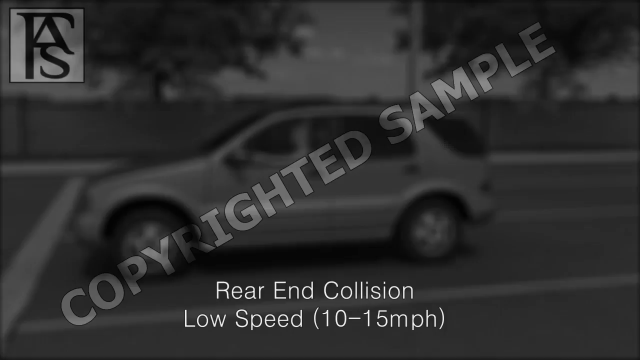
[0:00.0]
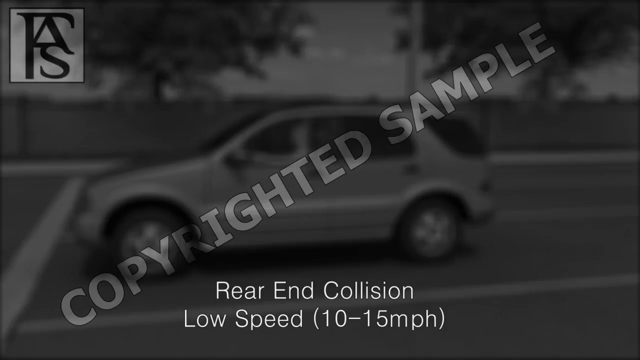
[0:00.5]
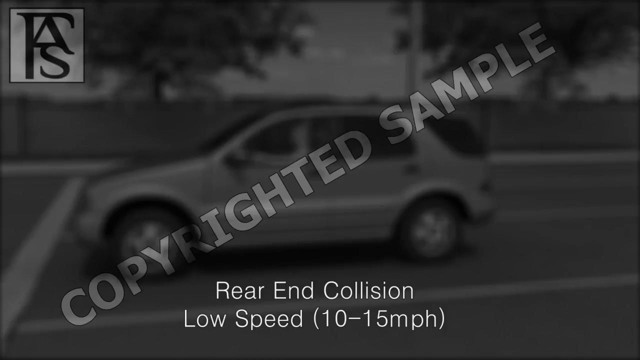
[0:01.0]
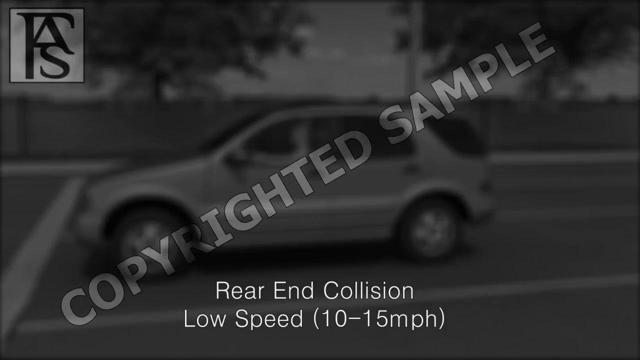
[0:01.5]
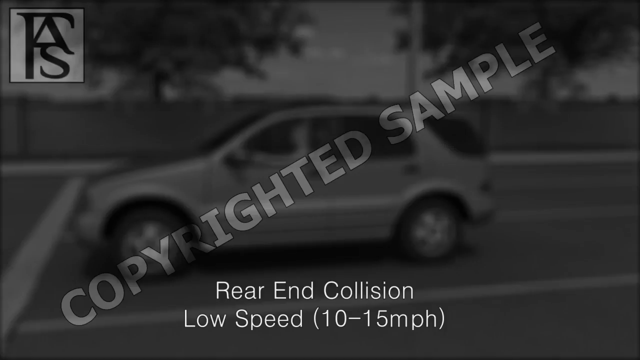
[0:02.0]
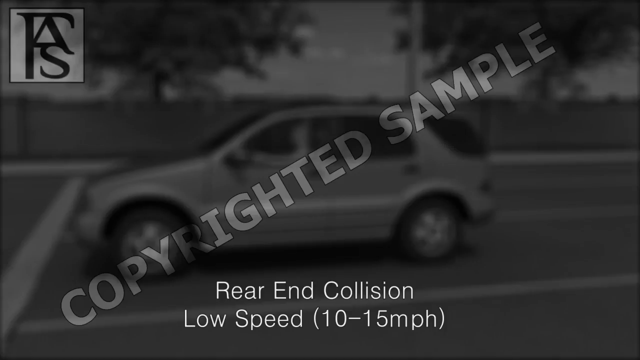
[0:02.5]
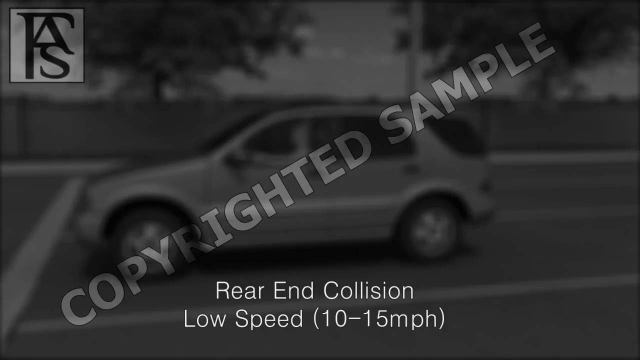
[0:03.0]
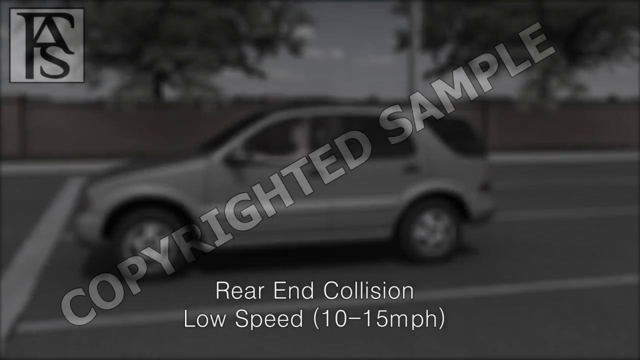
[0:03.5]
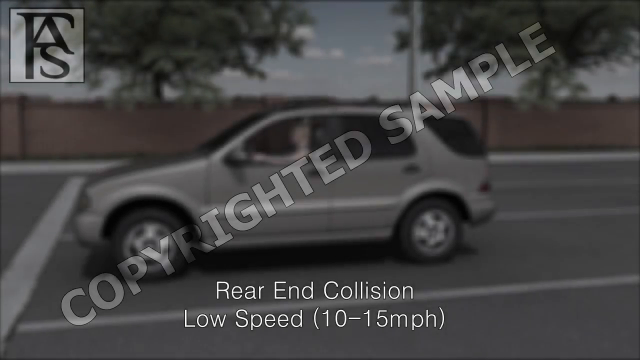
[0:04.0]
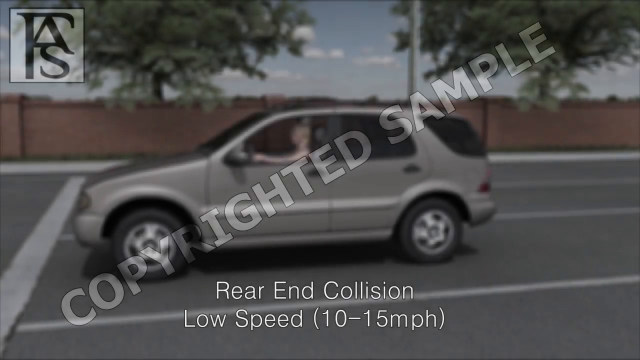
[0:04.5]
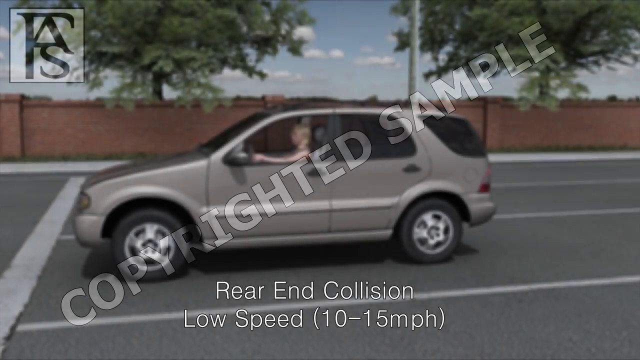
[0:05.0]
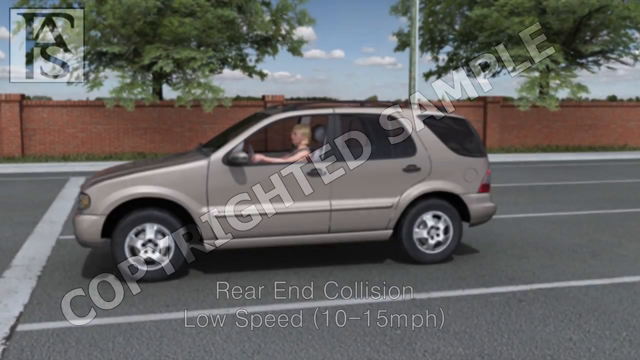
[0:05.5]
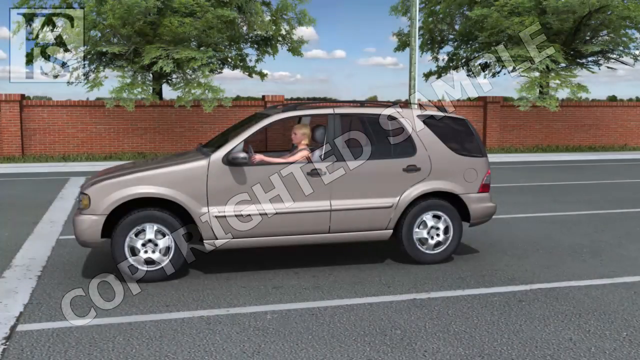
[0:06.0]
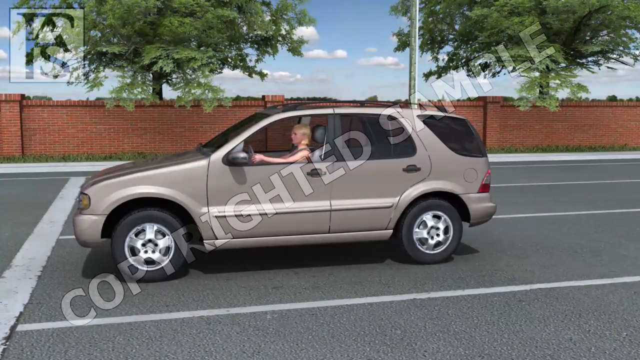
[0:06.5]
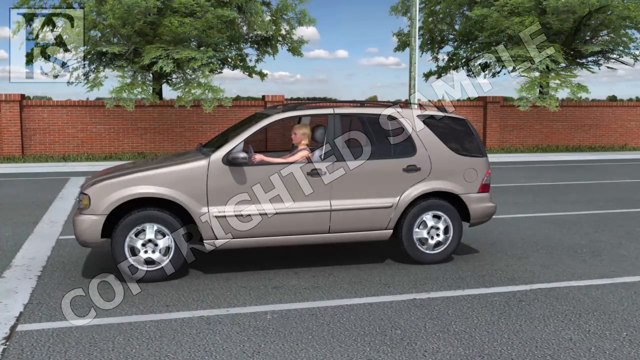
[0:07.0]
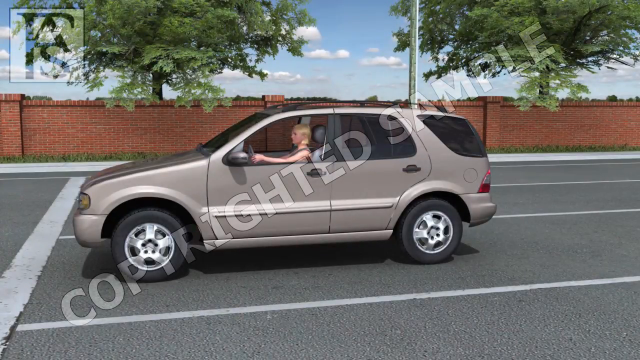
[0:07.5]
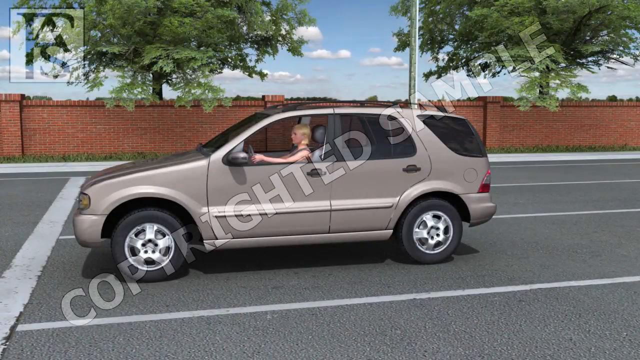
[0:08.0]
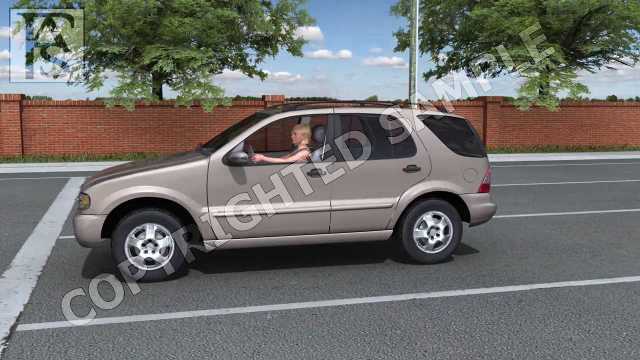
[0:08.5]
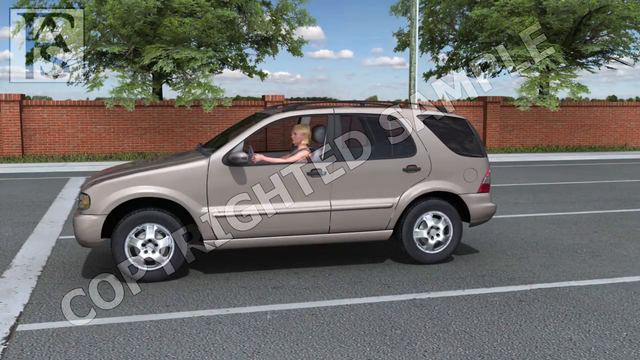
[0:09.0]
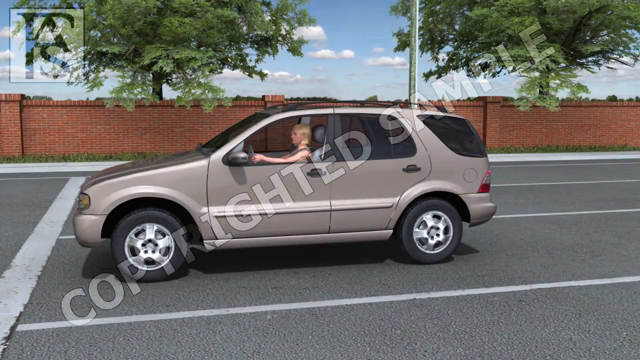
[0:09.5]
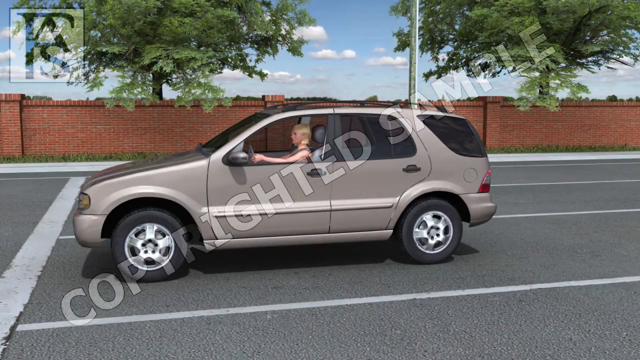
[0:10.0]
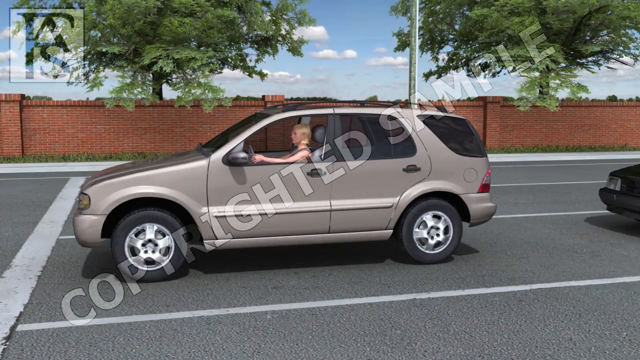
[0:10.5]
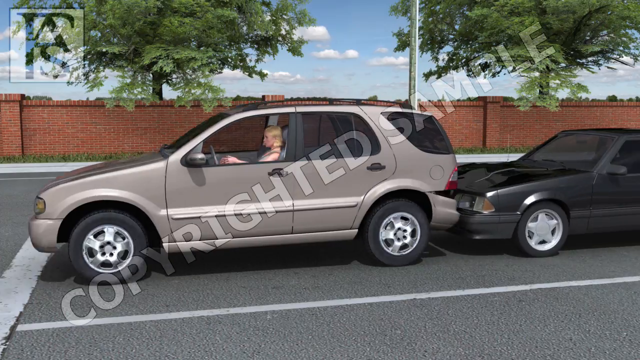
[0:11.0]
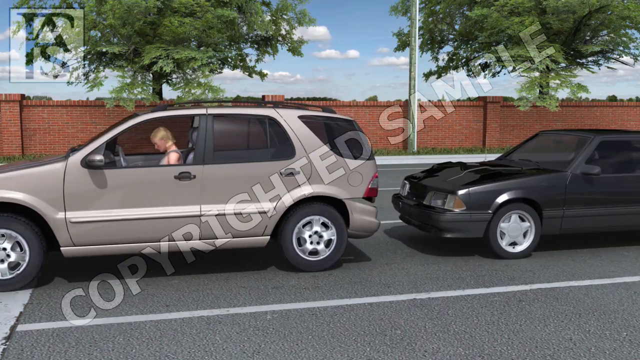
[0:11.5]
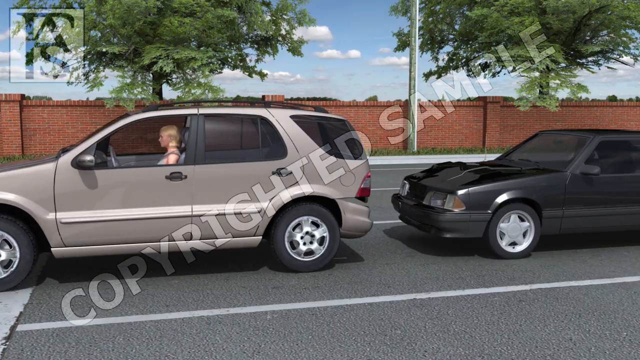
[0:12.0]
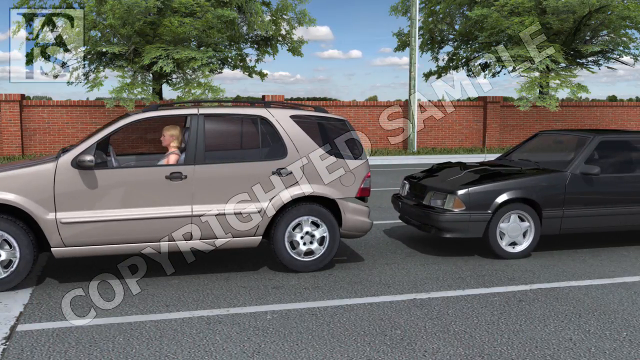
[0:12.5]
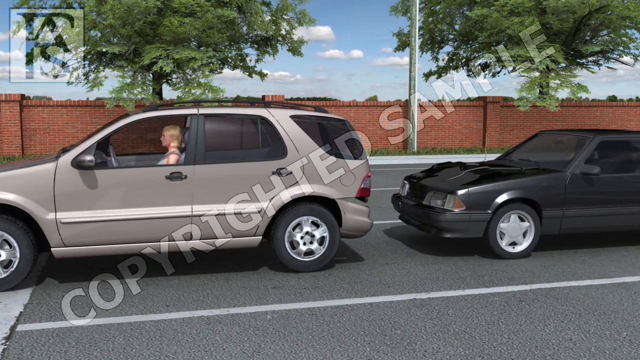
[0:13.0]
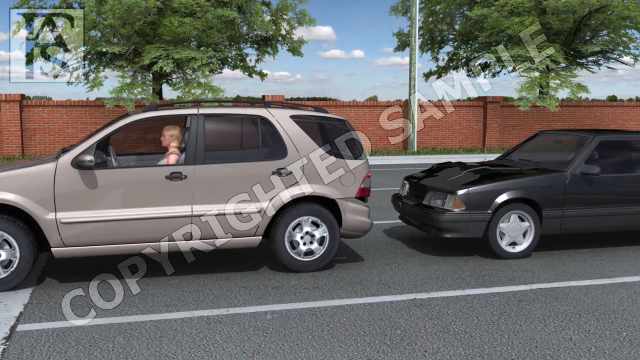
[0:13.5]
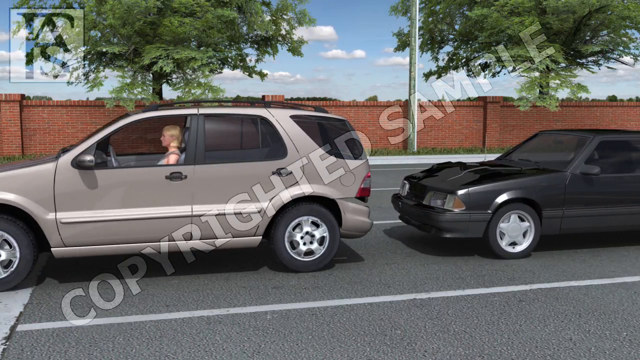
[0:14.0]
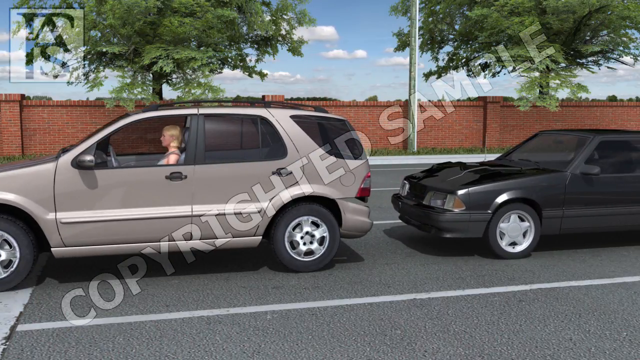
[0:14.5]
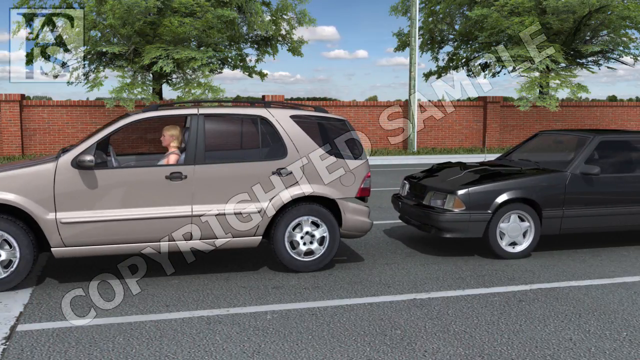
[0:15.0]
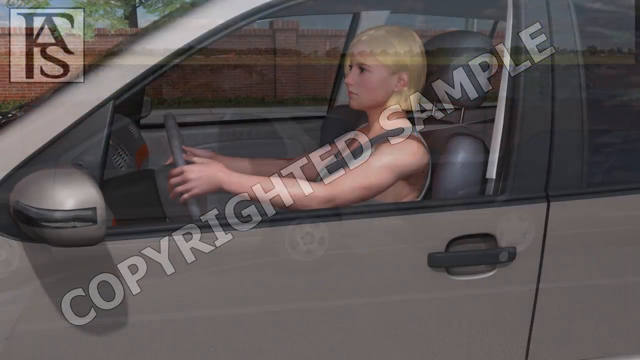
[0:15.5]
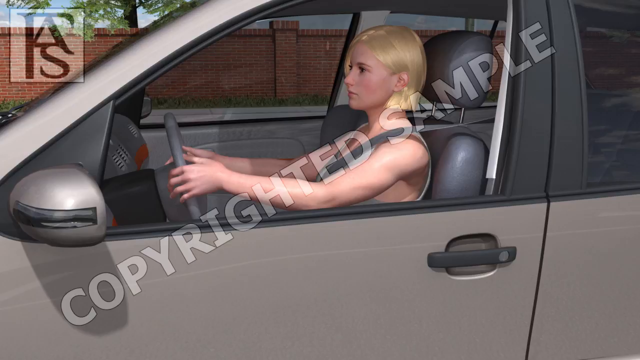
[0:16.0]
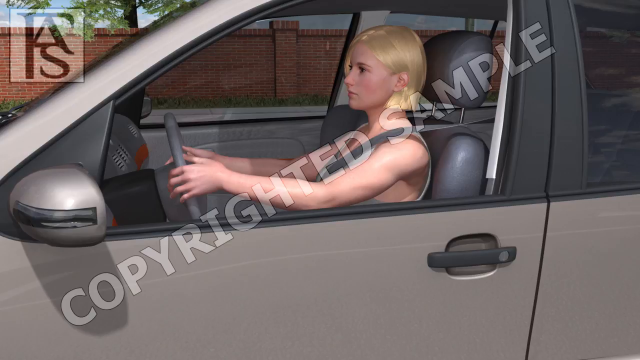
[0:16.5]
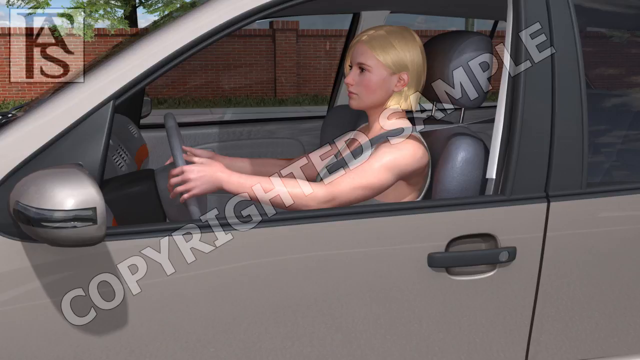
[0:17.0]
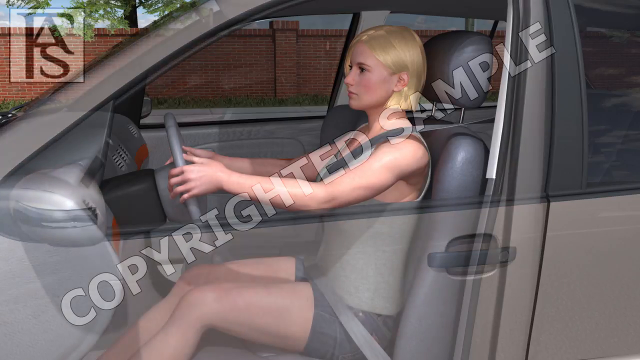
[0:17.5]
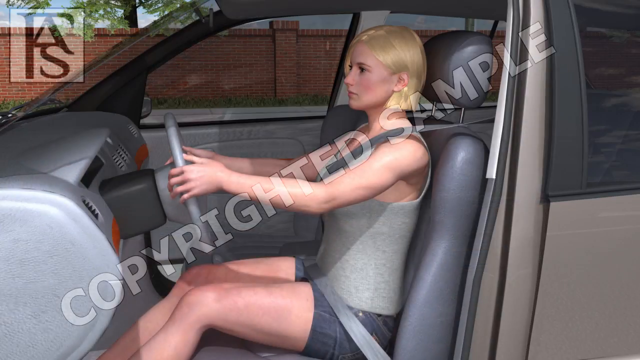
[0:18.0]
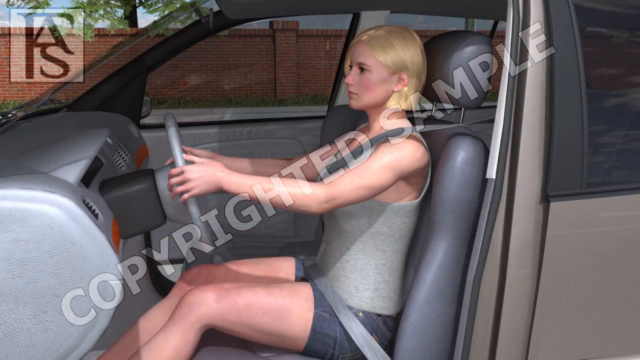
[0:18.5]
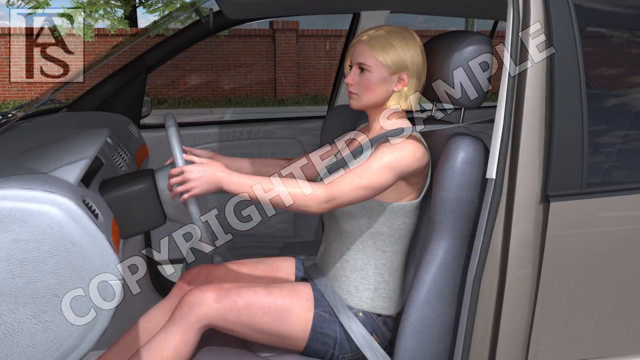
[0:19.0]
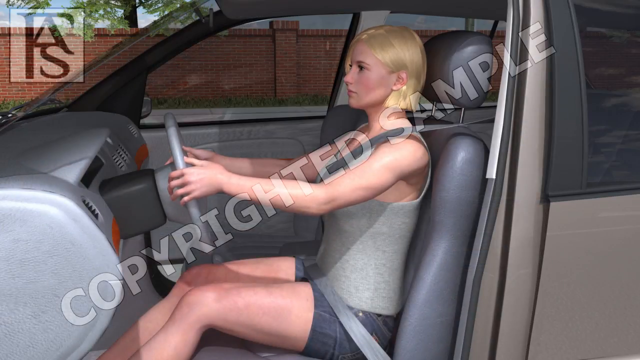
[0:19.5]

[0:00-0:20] In this illustrated instructional video, text on the lower part of the screen reads "Rear End Collision, Low Speed, 10 to 15 miles an hour," and a watermark across the center of the screen reads "Copyrighted Sample." A woman is sitting still in the road at a stop sign. A black car comes from behind and rear-ends the vehicle she is sitting in, pushing the entire car forward, damaging the rear end of her car and damaging the front end of the car that hit her. As the car rear-ends her, her body kind of jolts violently and her neck moves. Finally, the depiction kind of has the door removed from the car, showing the woman sitting inside in the driver's seat, behind the wheel, with her seat belt on.